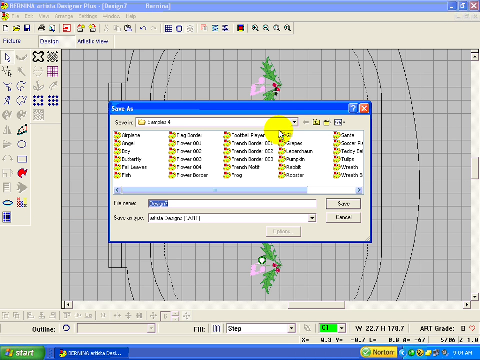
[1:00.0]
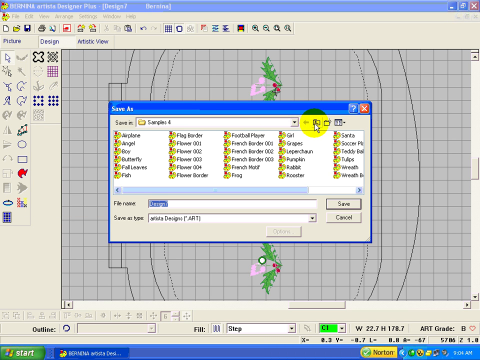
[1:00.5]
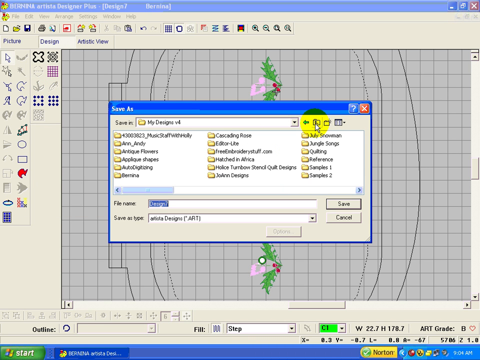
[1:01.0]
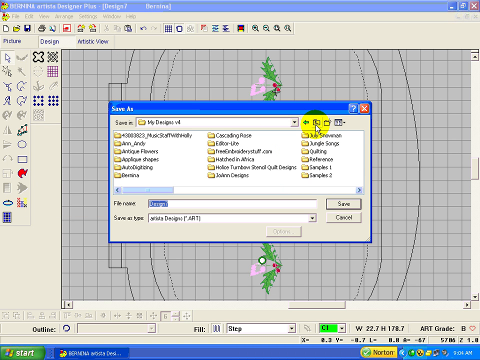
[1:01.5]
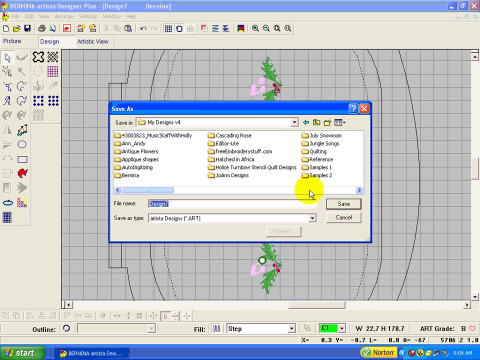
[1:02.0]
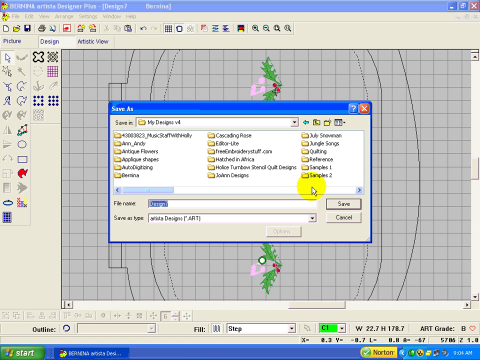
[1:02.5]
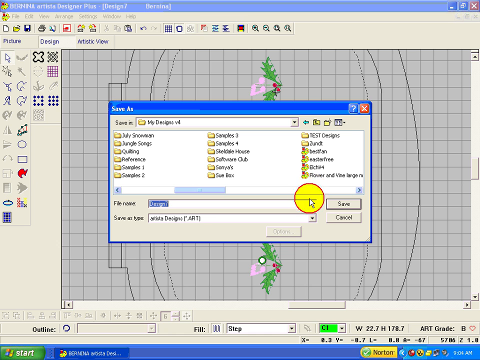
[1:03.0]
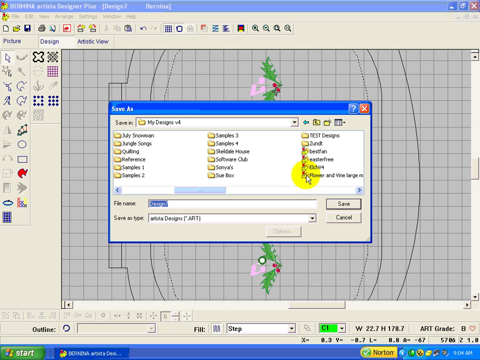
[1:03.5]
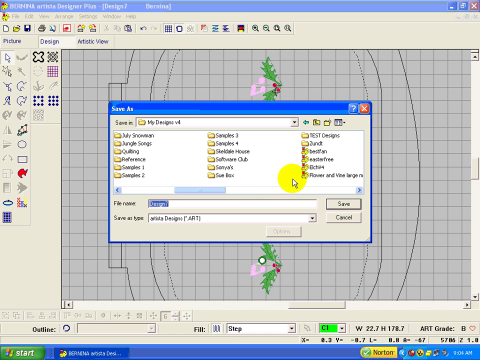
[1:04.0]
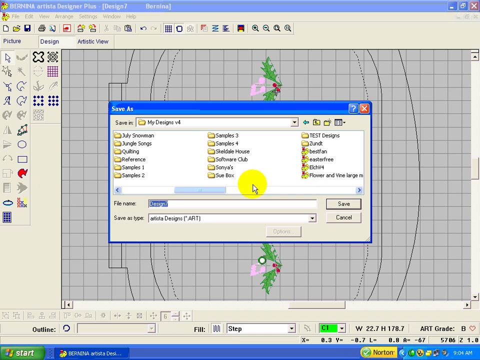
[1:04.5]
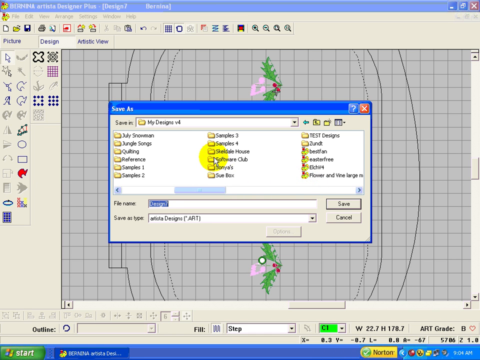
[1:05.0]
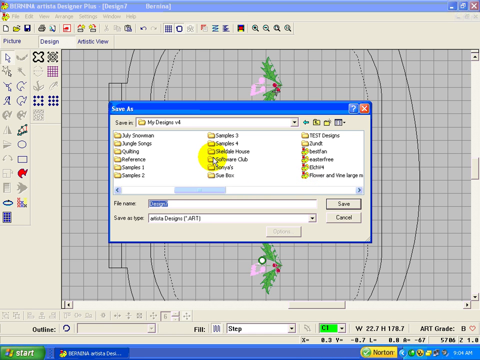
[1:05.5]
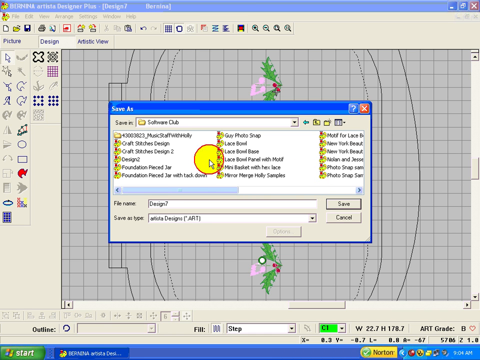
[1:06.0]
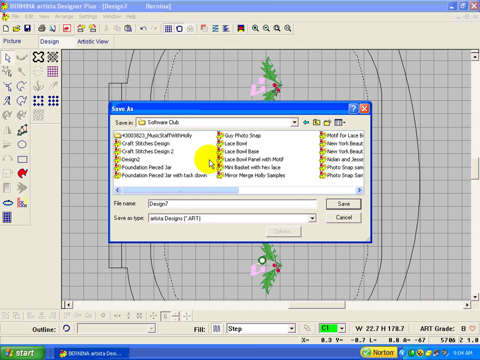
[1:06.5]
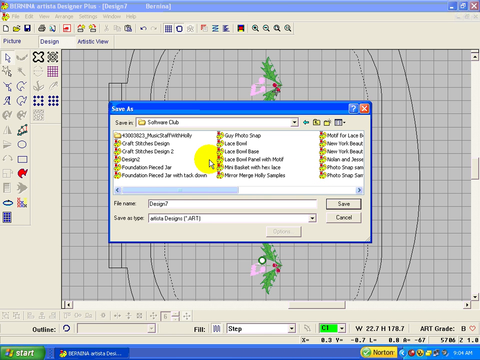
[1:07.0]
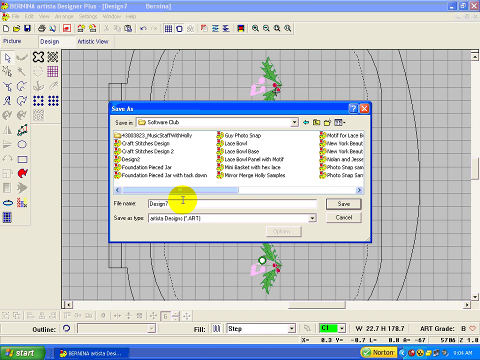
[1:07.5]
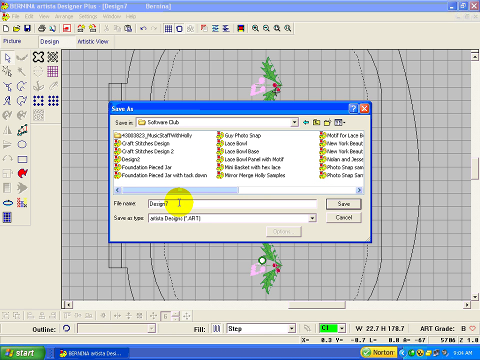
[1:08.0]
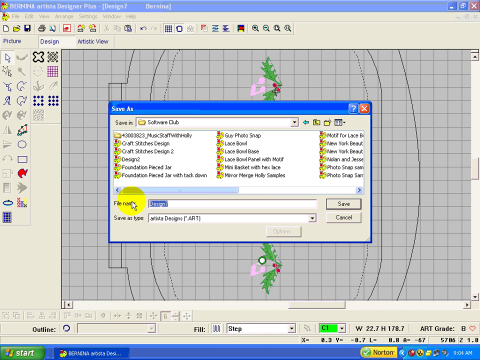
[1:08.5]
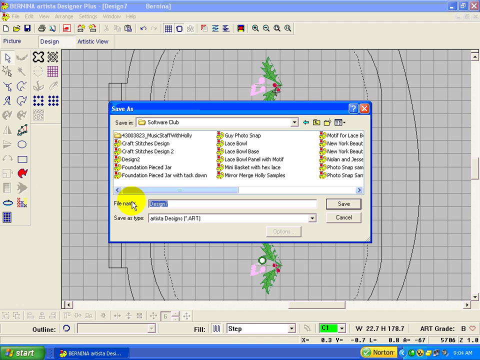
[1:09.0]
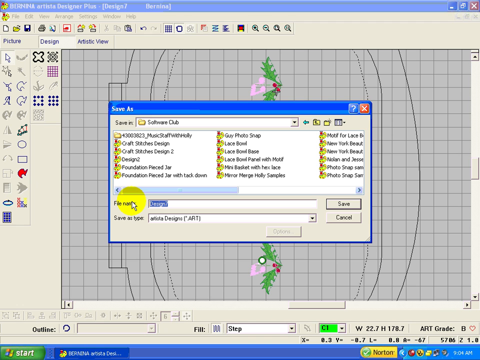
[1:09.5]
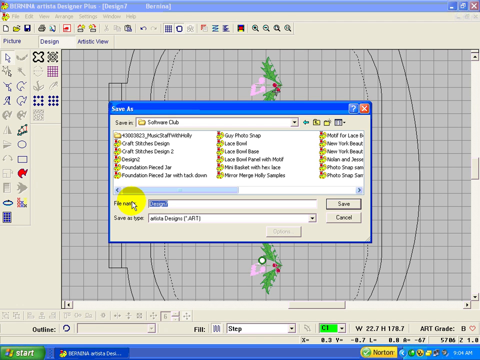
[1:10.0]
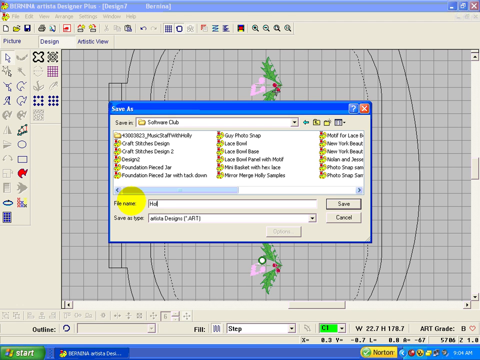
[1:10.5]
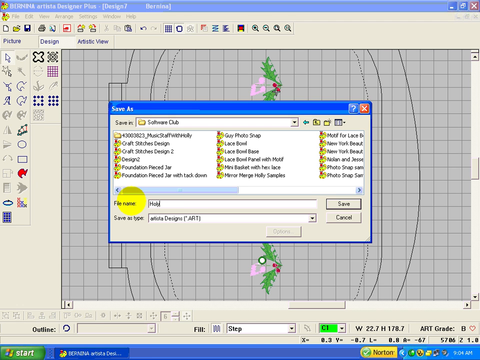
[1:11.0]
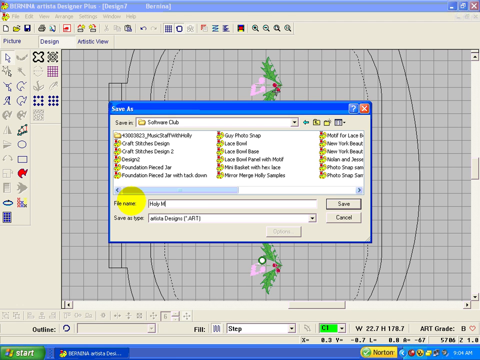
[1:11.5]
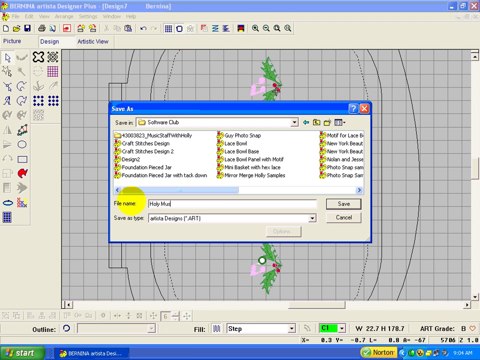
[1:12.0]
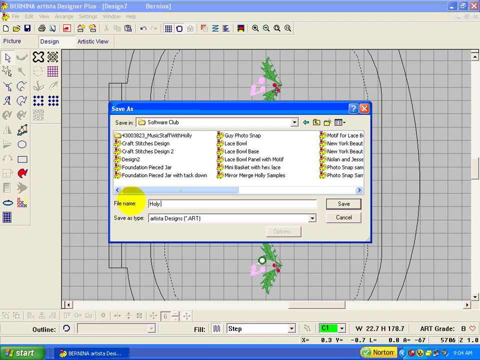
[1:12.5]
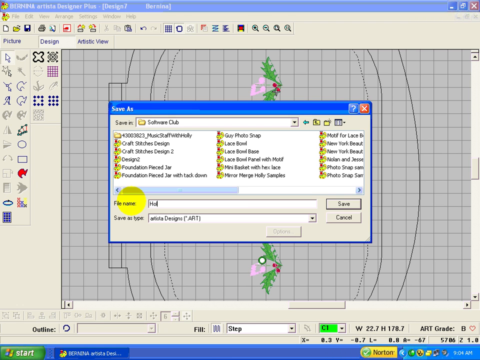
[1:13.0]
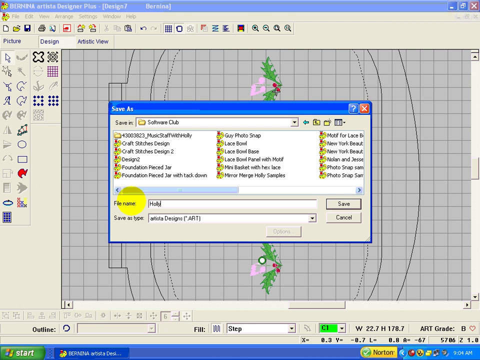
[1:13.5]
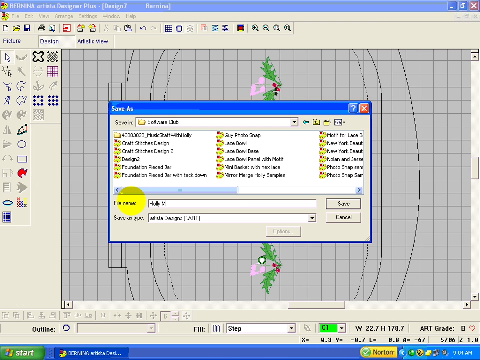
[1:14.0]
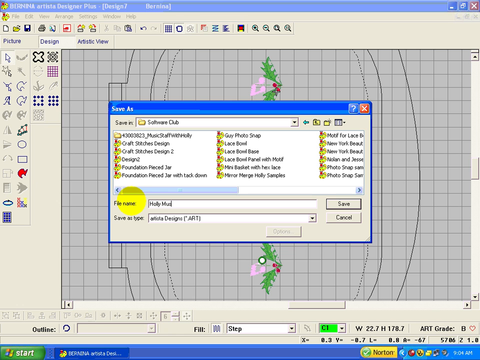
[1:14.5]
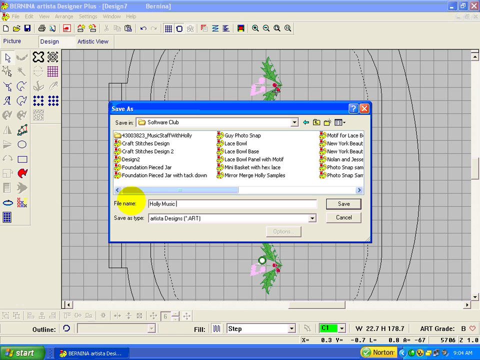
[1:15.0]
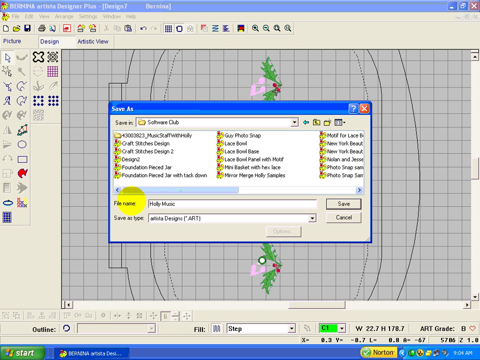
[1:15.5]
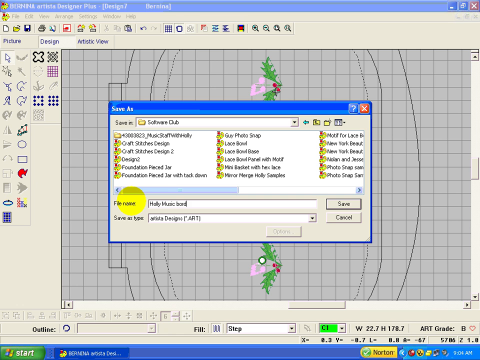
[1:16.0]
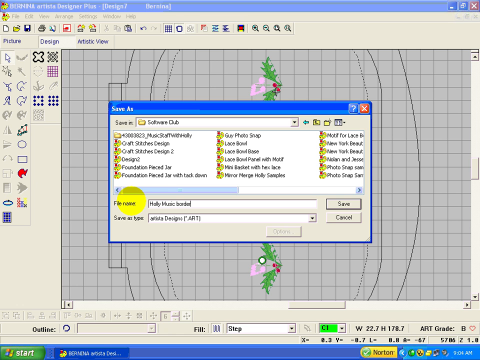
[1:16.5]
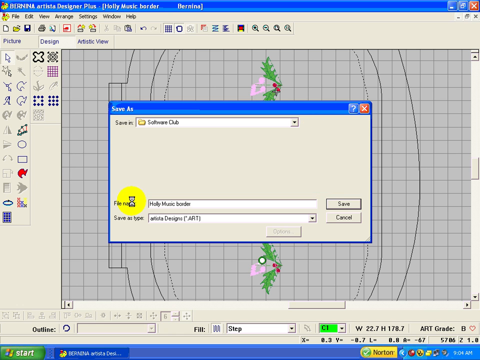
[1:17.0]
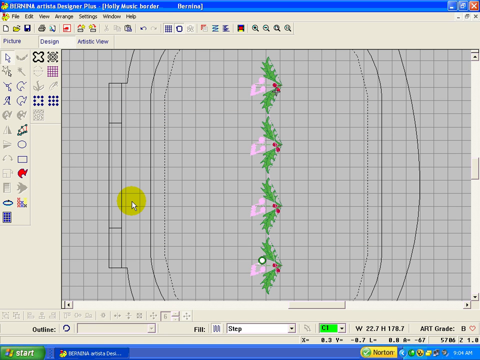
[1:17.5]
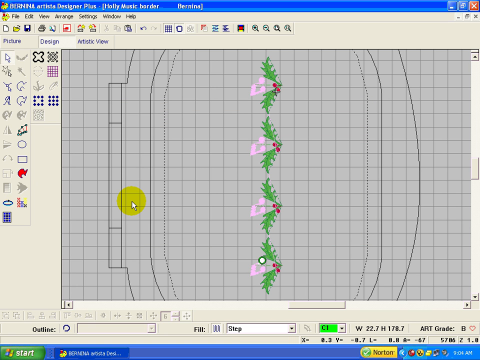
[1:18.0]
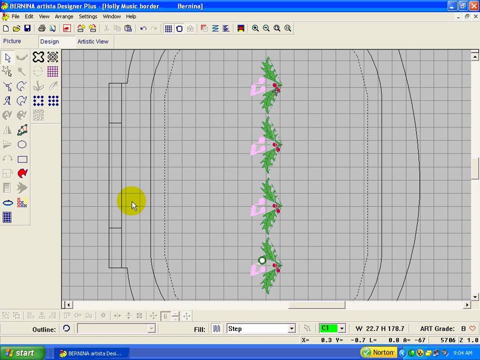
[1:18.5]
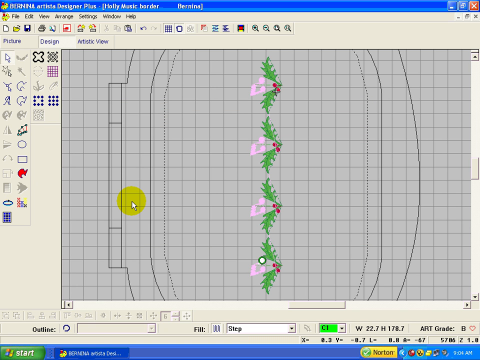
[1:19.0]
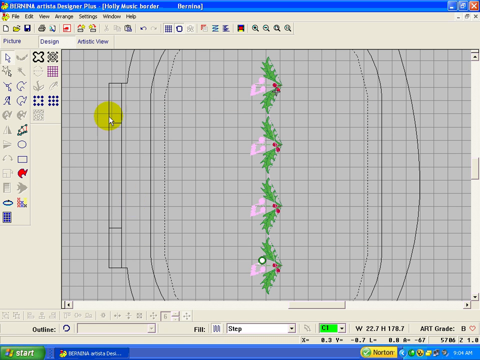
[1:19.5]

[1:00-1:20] After a moment of loading, a Save As window appears in the very center of the screen. It lists many files that are already saved, including "Airplane," "Angel," "Boy," "Butterfly," "Flowers" and "French Borders." The Save In field reads "Samples 4," and the file name defaults to "Design 2." The mouse cursor clicks a button that changes Save In to "My Designs version 4," then clicks "Software Club" in the file list. The file name is highlighted and changed to "Holly Music Border," and Enter is pressed. The window disappears and the file is saved. The mouse cursor then moves until it stops.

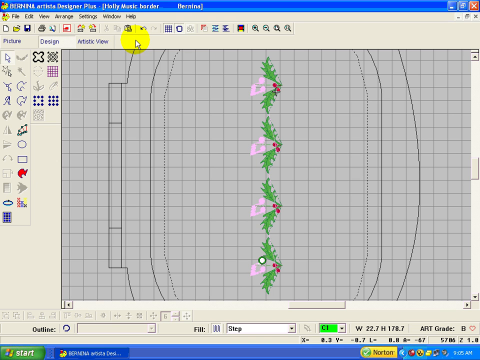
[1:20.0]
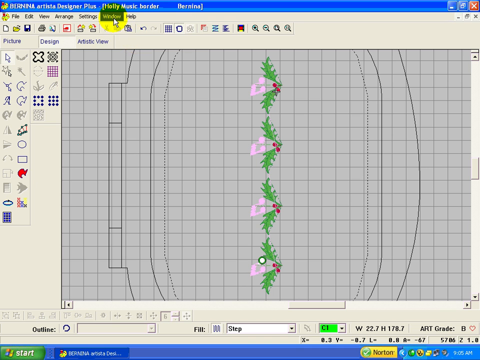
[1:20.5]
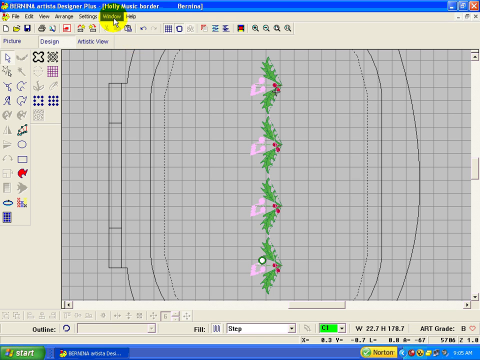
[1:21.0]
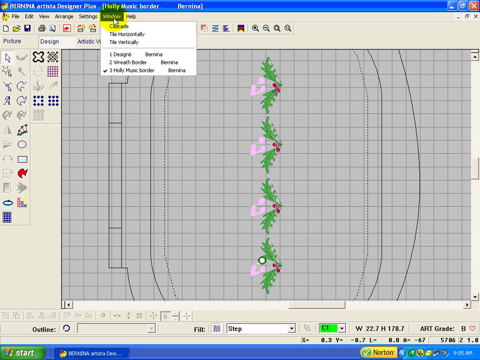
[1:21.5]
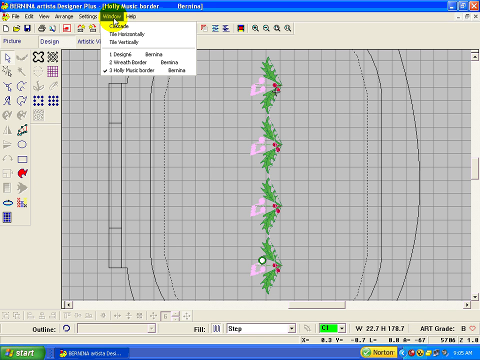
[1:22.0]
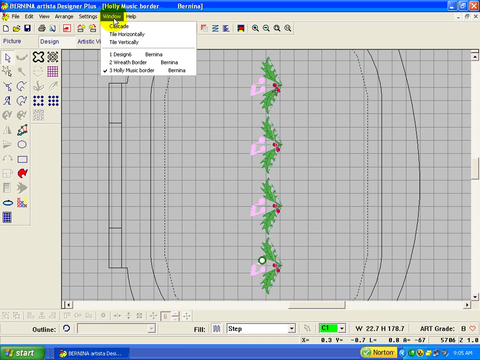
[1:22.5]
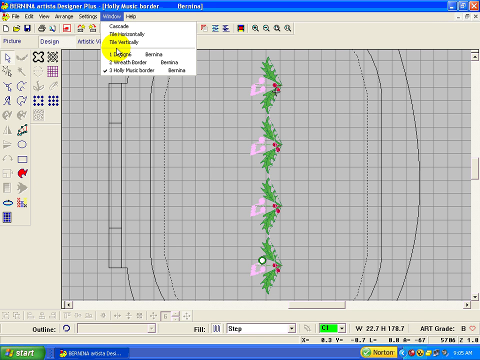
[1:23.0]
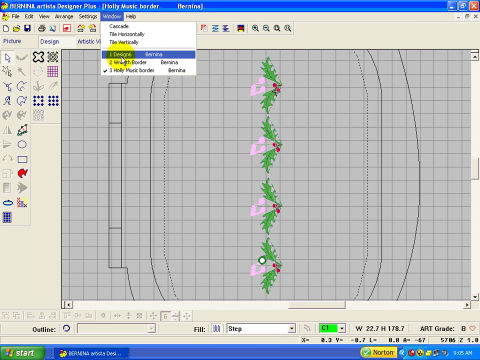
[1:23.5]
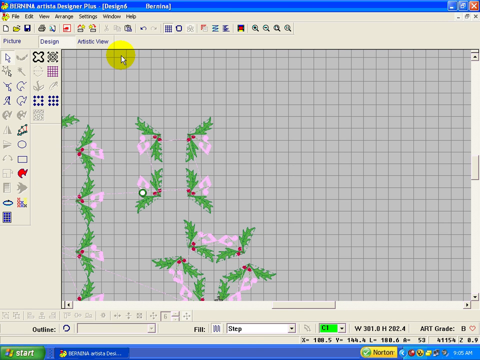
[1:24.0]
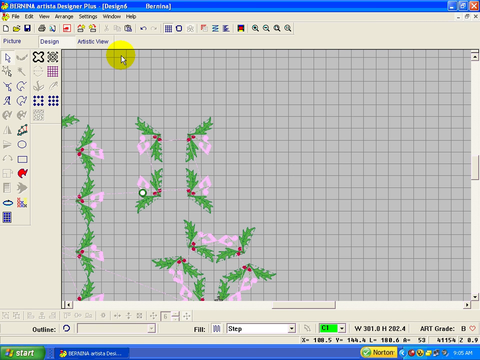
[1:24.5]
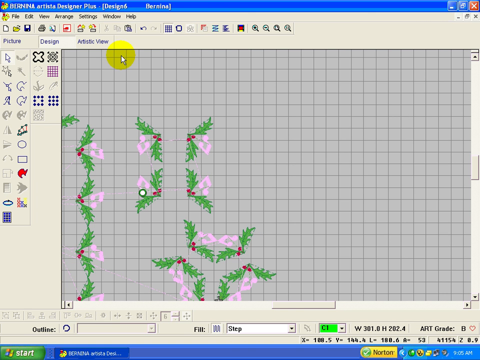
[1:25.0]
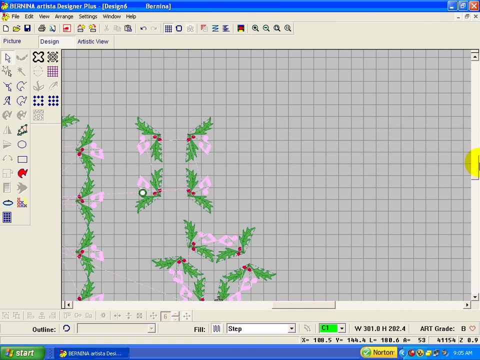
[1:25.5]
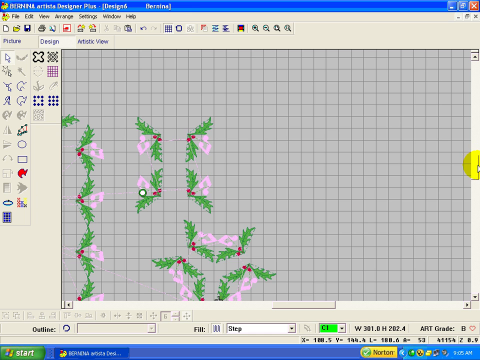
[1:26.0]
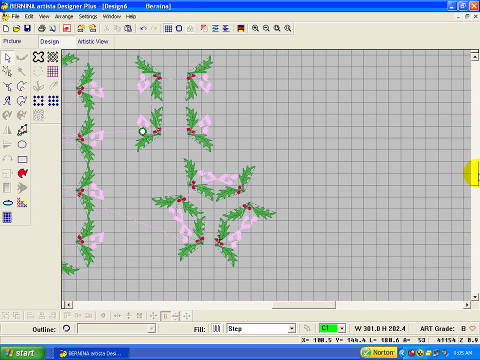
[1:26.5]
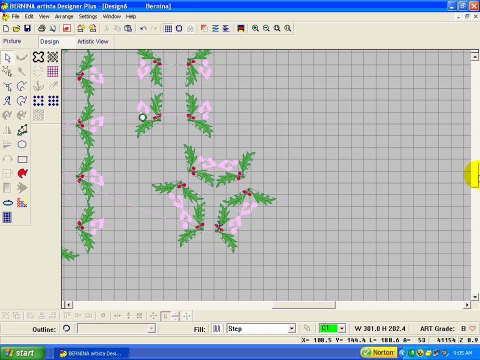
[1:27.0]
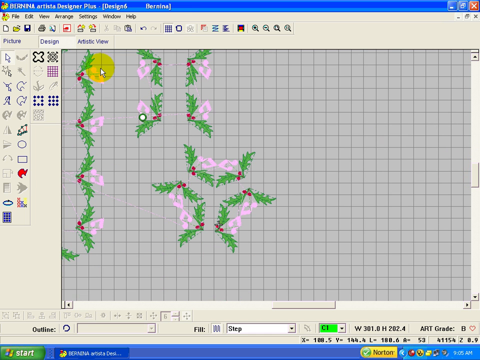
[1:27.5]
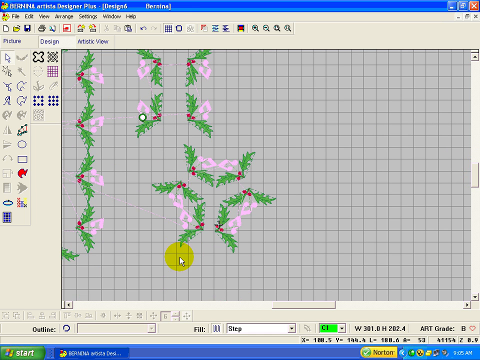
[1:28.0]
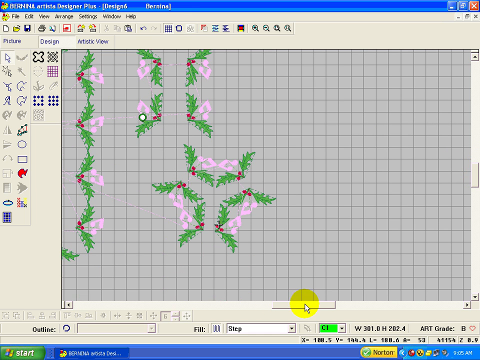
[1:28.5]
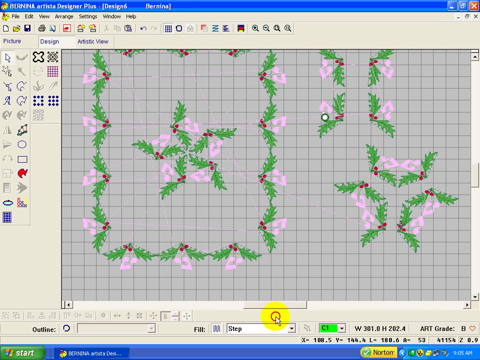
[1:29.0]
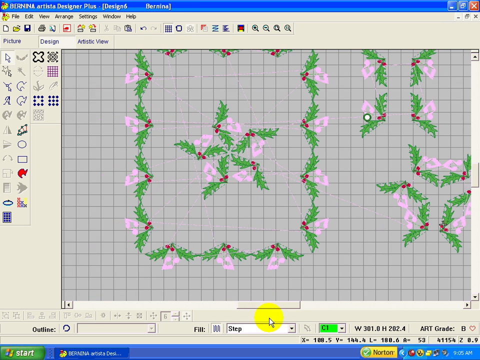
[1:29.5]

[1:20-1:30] With the file saved, the screen returns to the graph, which holds an outline of some sort of shape and the four berry-and-leaf decorations aligned vertically. The mouse cursor, still marked by the yellow circle, is back at the top. It clicks Window, and a small drop-down menu appears. The cursor moves down and selects the fourth option, which reads "1 Design 6." The graph switches to the original graph holding all the red berry leaf decorations, except the four that were cut and pasted into the new graph. The mouse clicks to close the drop-down menu. Using the scrolling wheel on the right, it scrolls down and then to the left, which brings the decorations into better view.